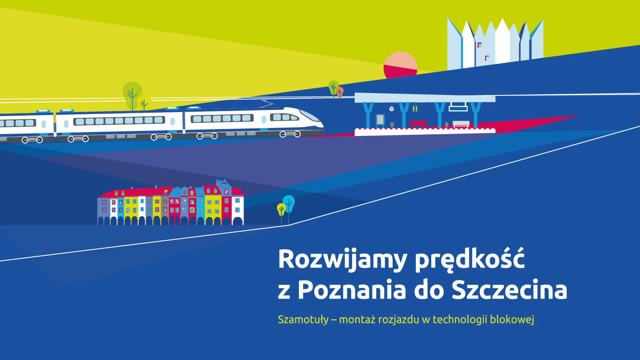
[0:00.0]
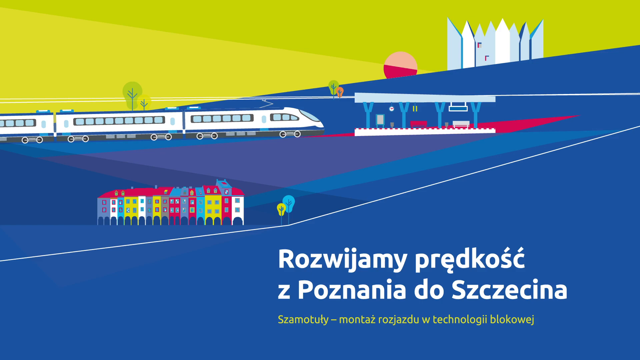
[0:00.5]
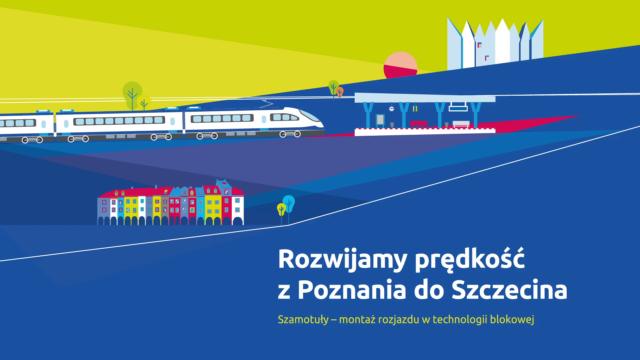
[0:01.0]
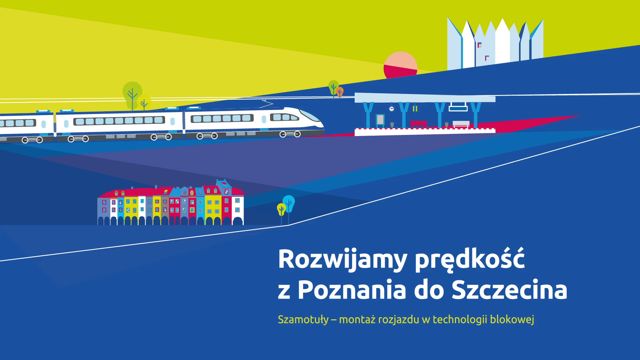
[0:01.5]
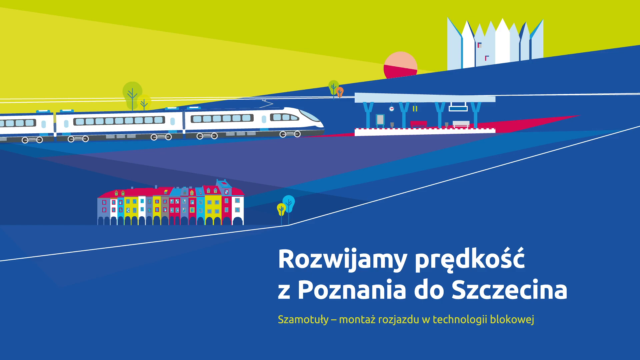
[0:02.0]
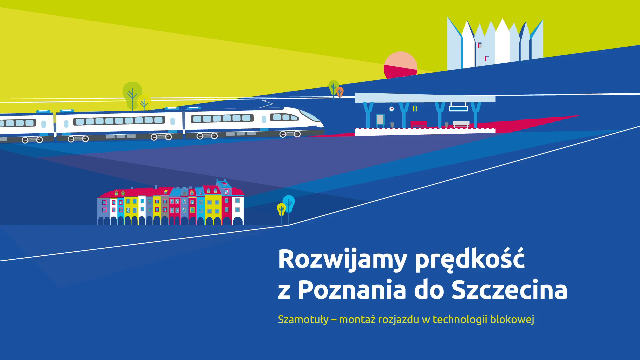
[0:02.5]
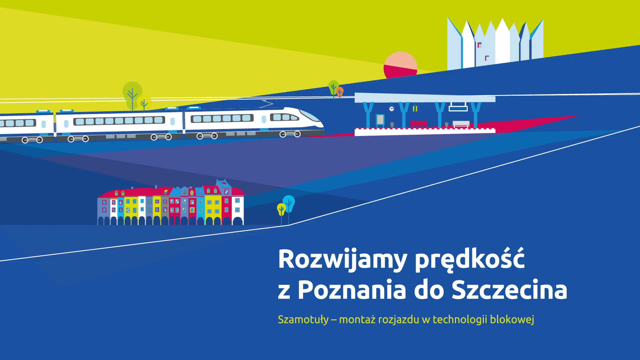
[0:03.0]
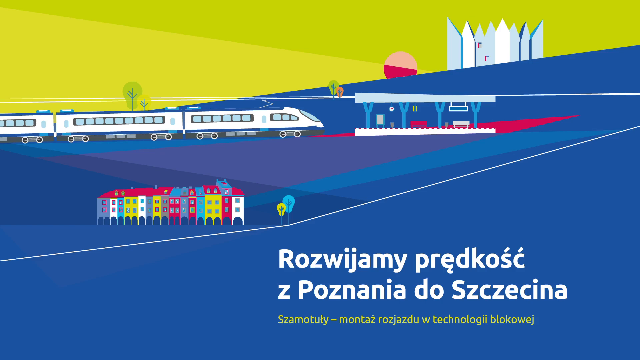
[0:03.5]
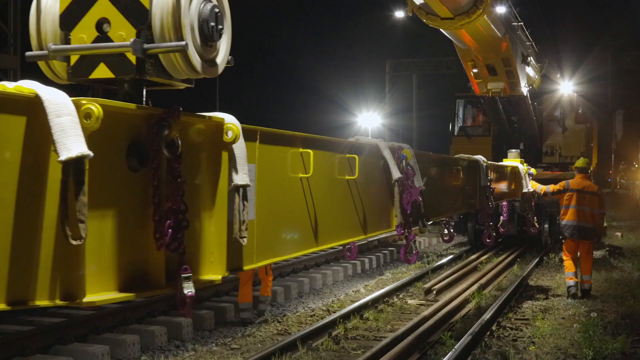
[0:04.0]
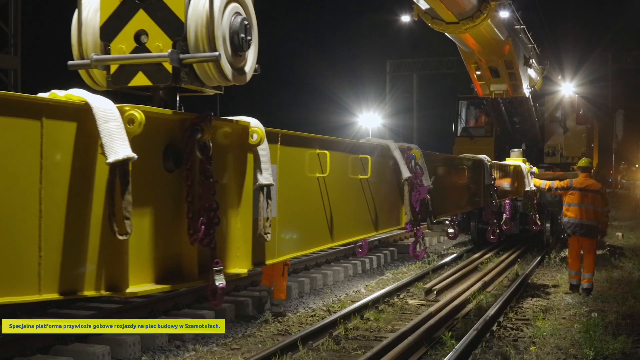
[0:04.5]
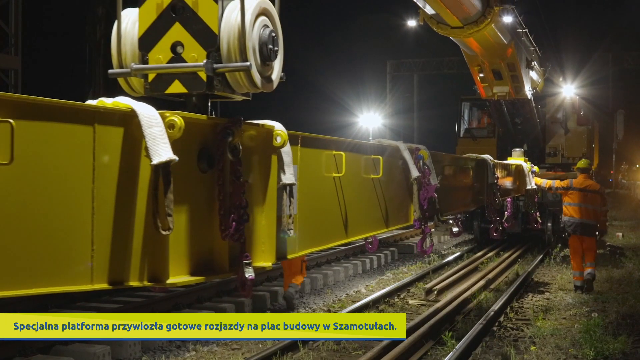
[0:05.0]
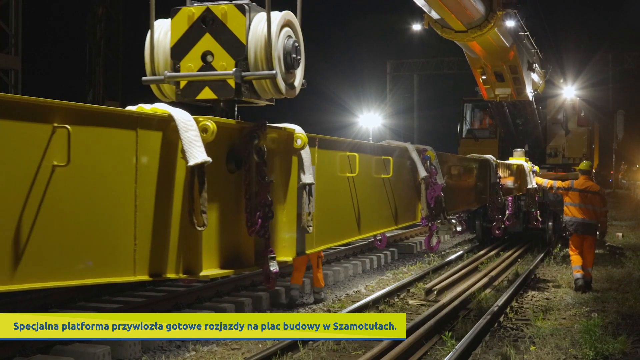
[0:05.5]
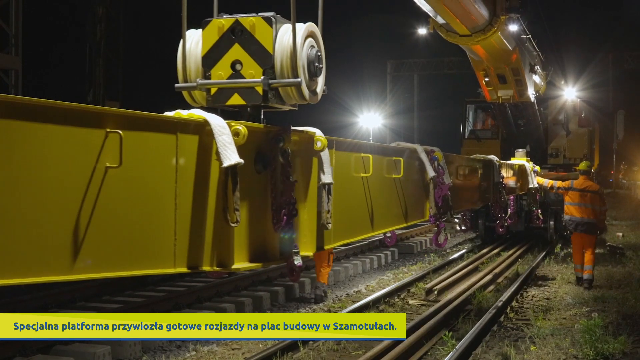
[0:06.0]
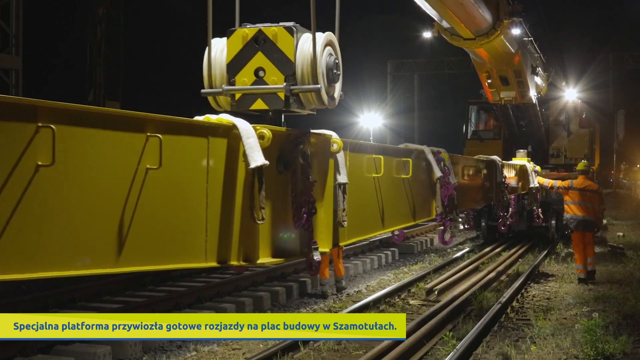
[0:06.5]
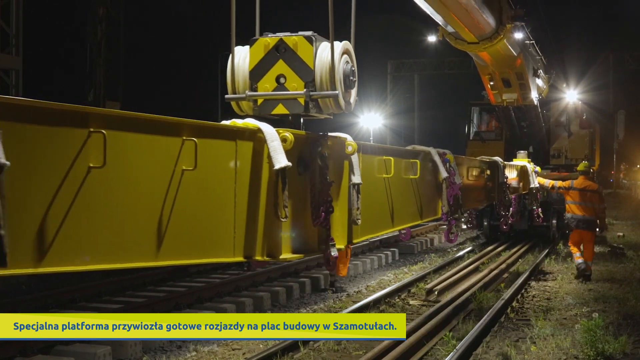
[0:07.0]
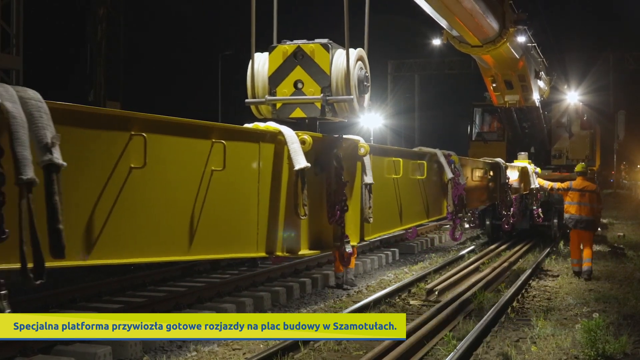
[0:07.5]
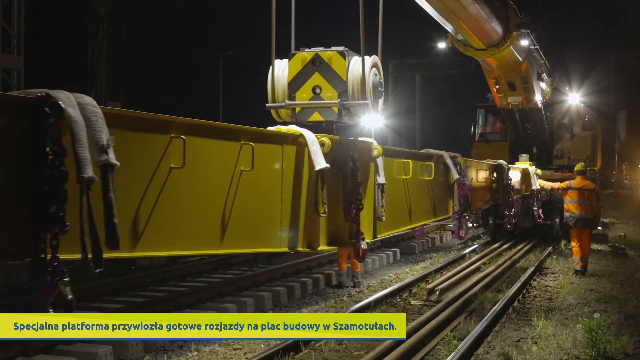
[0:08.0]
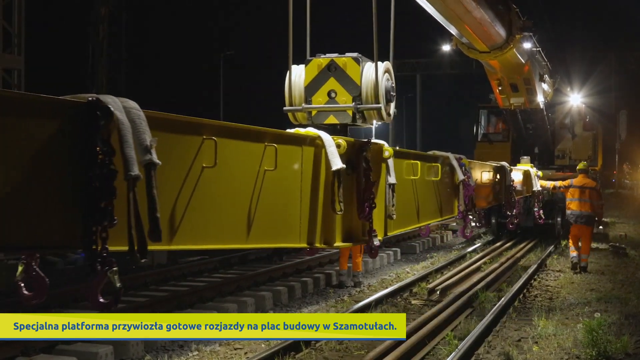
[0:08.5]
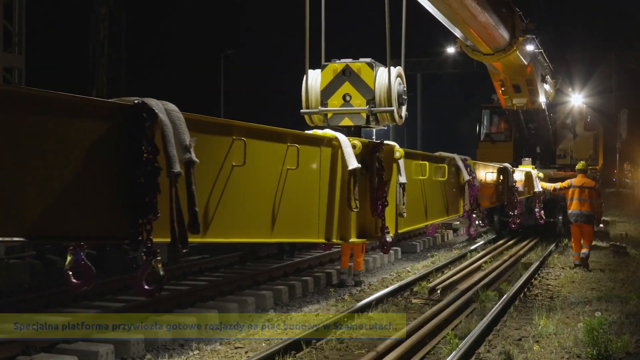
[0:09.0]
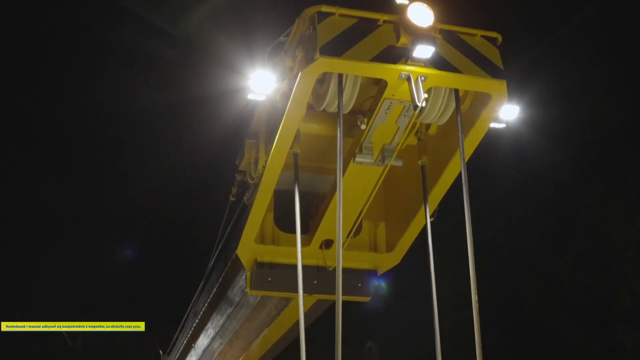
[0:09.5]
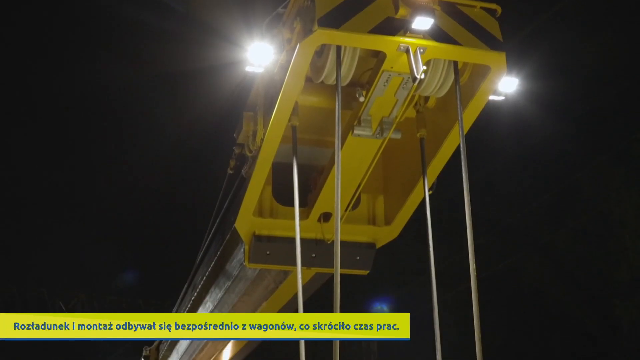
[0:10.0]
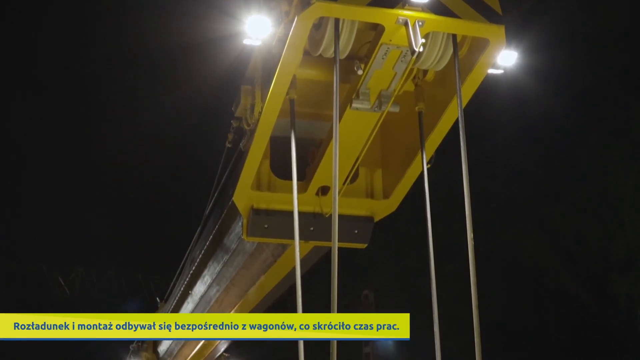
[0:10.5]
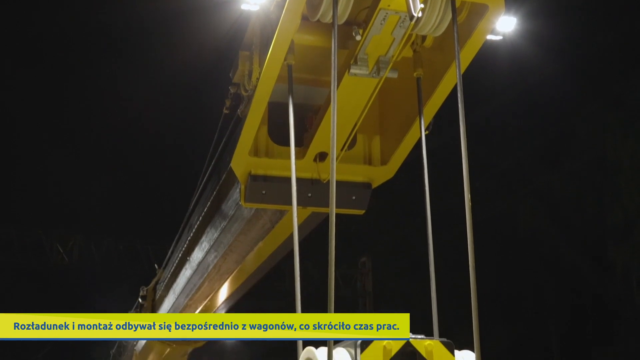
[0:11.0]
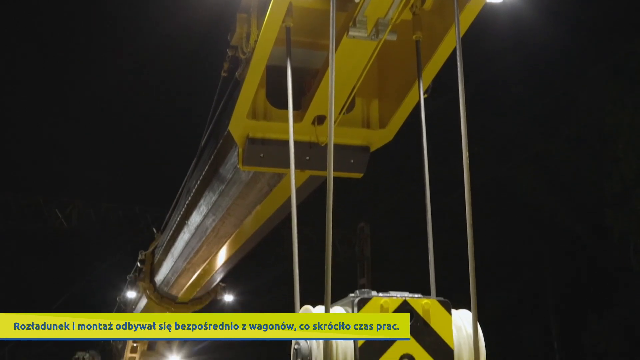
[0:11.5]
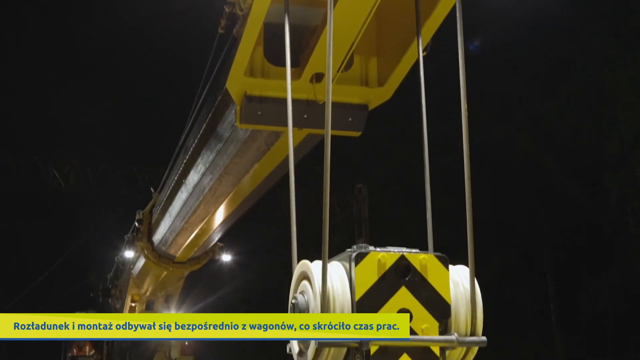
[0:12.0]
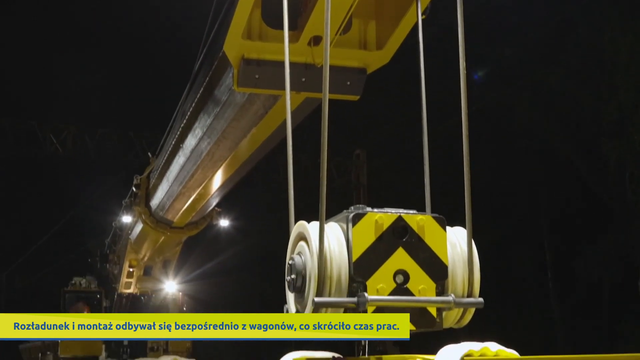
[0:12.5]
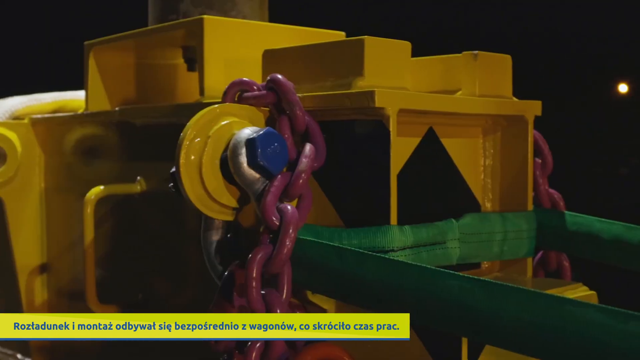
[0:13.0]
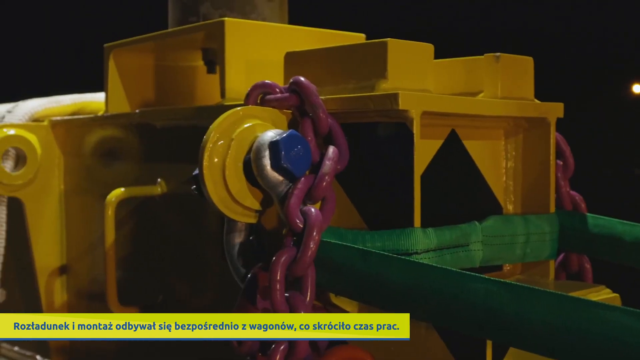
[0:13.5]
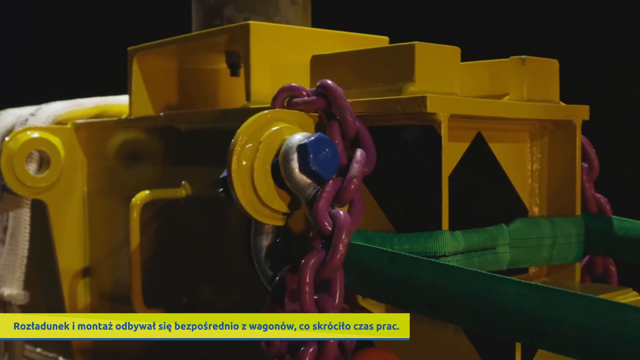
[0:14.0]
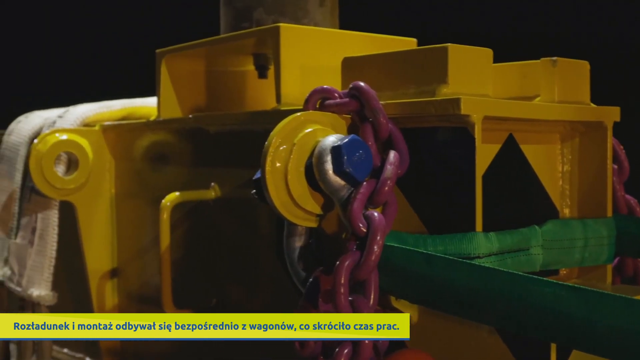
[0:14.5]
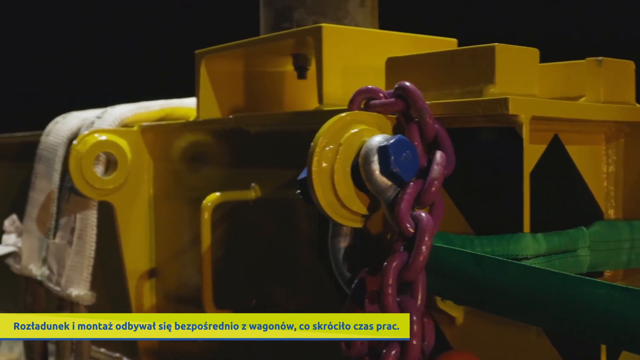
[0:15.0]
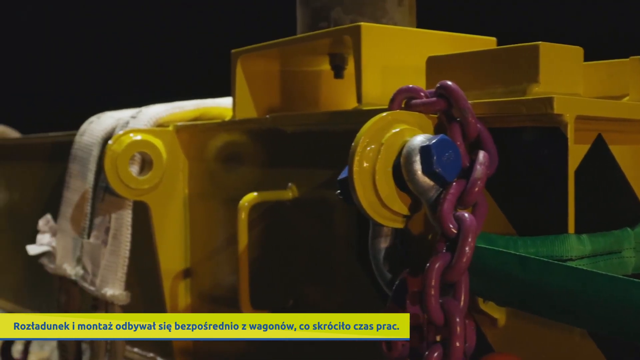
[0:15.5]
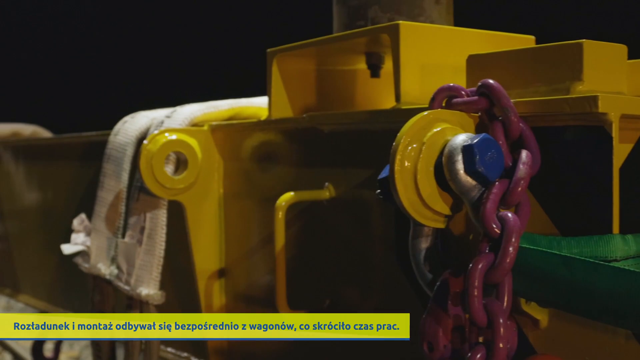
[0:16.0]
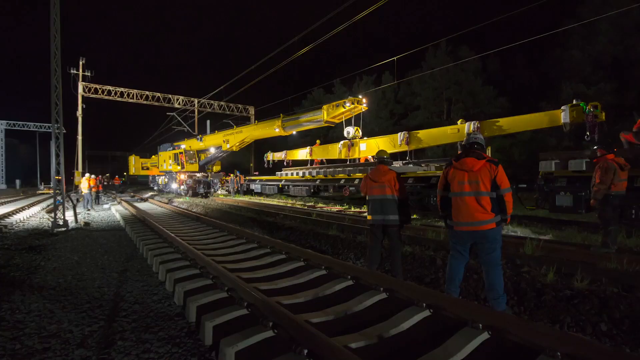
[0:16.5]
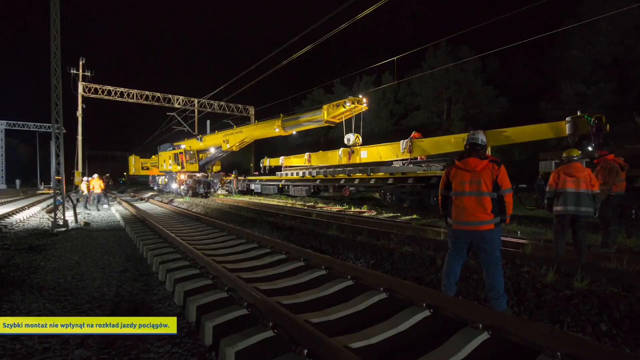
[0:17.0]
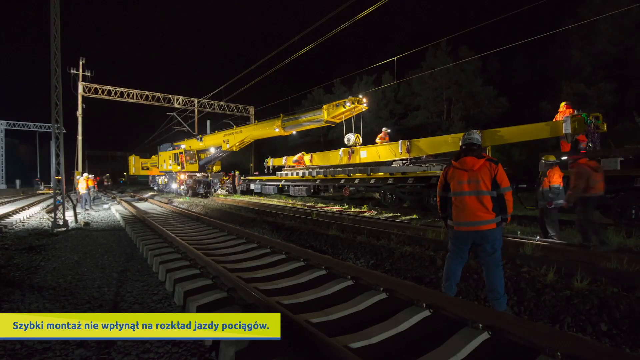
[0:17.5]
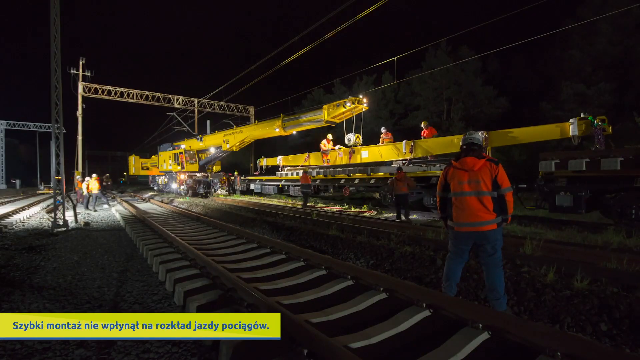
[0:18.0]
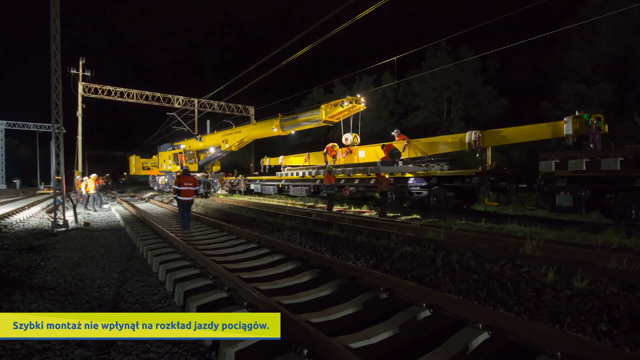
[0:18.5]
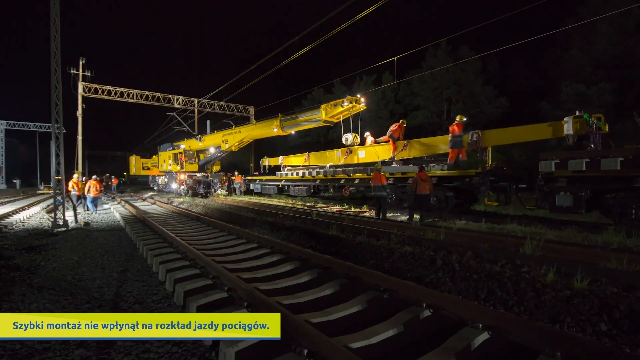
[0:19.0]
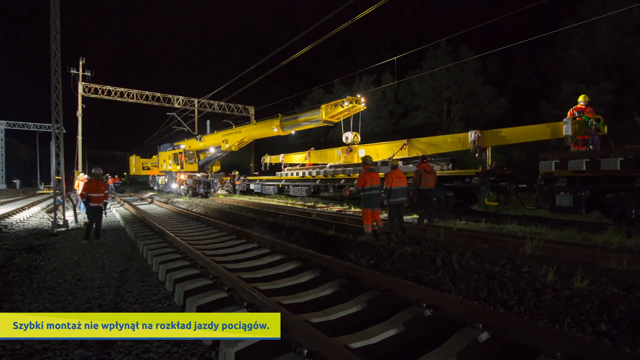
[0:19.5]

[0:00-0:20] The video opens with a still picture animation of a train approaching a train station. Under the train are a bunch of buildings in blue, white, yellow and red, and in the far distance there are more buildings. The colour is mostly blue and the sky is yellow. Next, a forklift on the train tracks lifts a long yellow piece of metal, and workers wearing orange jumpsuits and yellow hard hats are there, one of them sort of putting his left hand on the piece of metal. Then a large yellow metal crane with thick ropes holds something up. A close-up follows of a large yellow piece of metal with a large, thick purple chain attached to it. The video then cuts to a time lapse of the crane slowly dropping the long yellow piece of metal as the workers walk around it, putting it down safely.